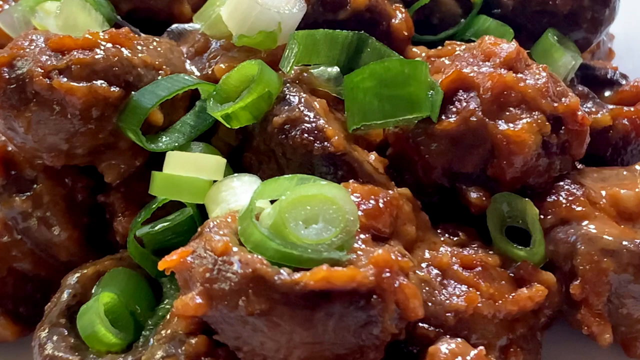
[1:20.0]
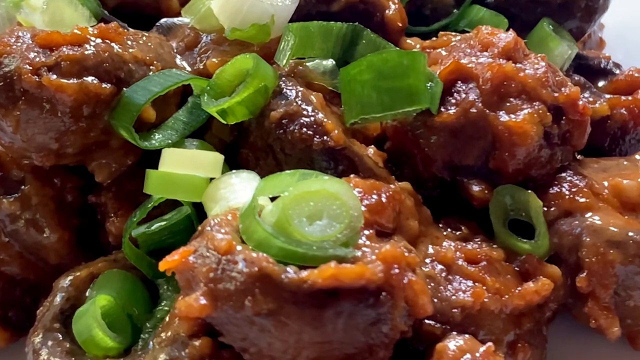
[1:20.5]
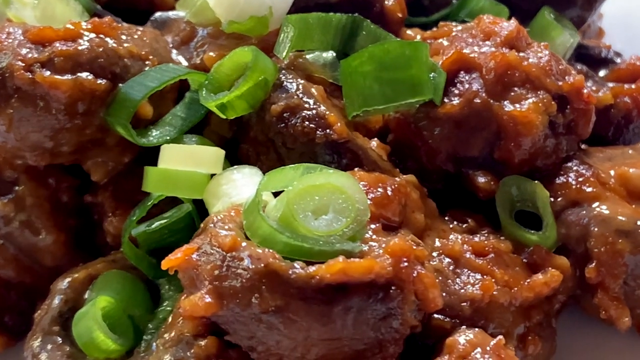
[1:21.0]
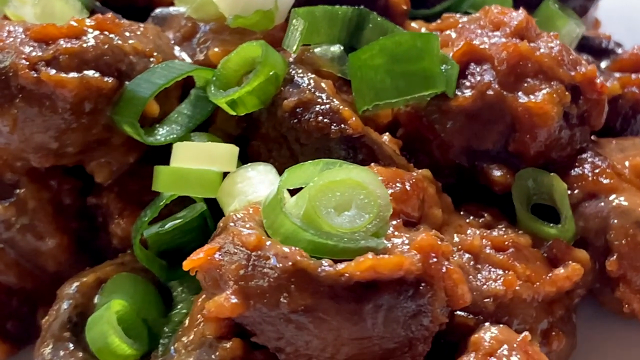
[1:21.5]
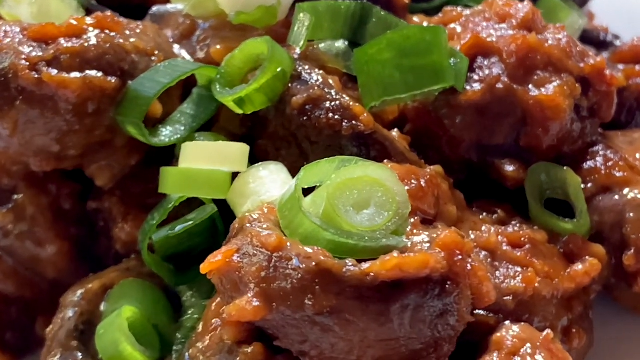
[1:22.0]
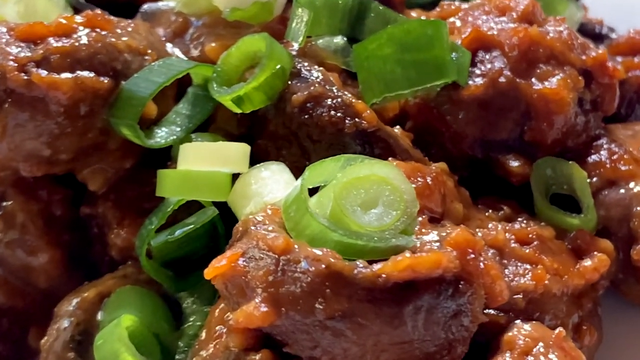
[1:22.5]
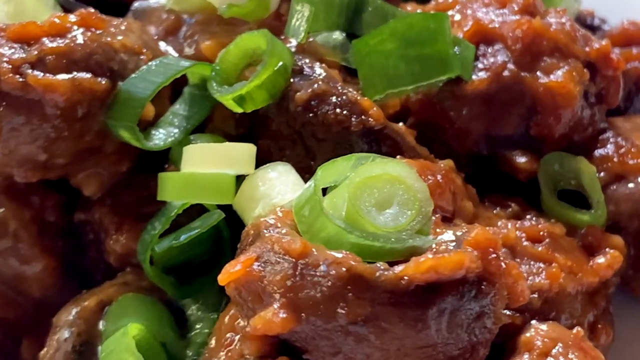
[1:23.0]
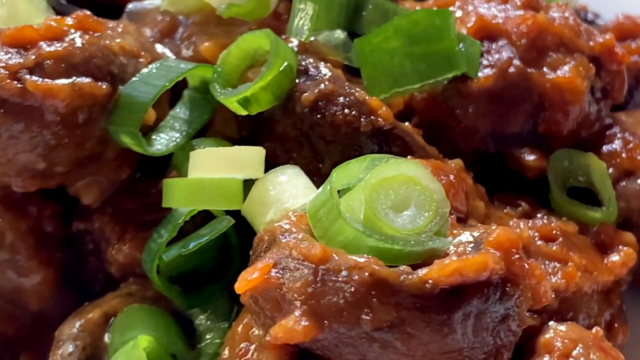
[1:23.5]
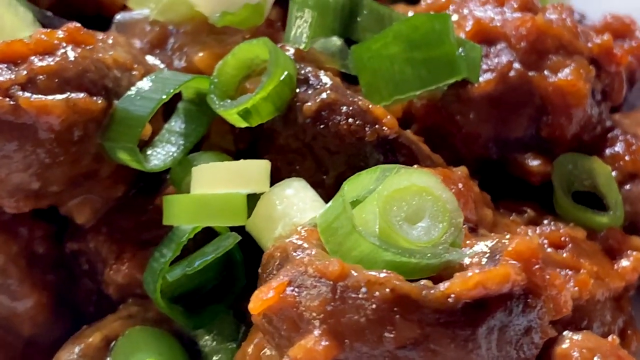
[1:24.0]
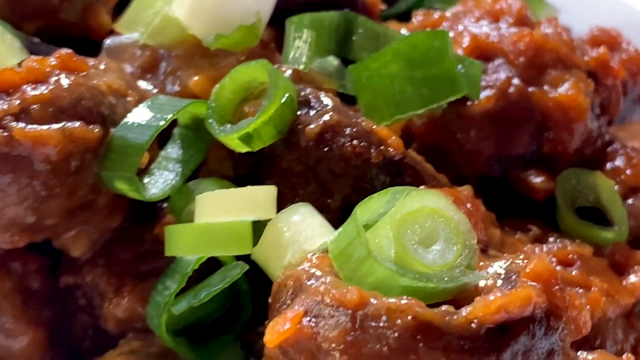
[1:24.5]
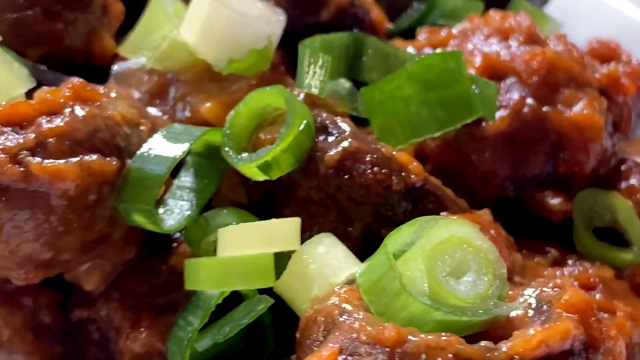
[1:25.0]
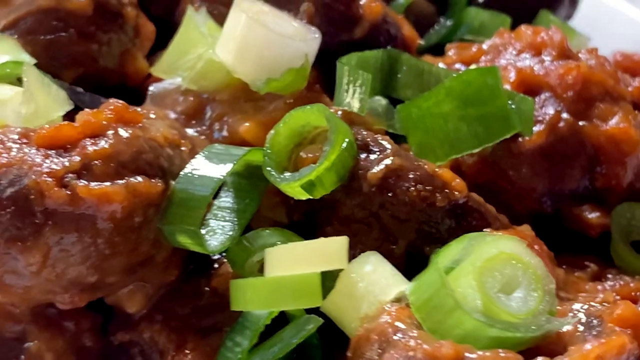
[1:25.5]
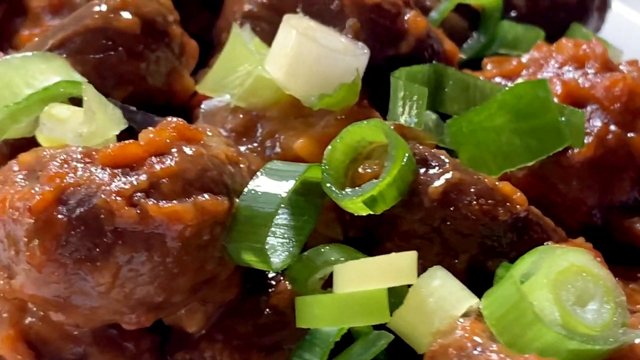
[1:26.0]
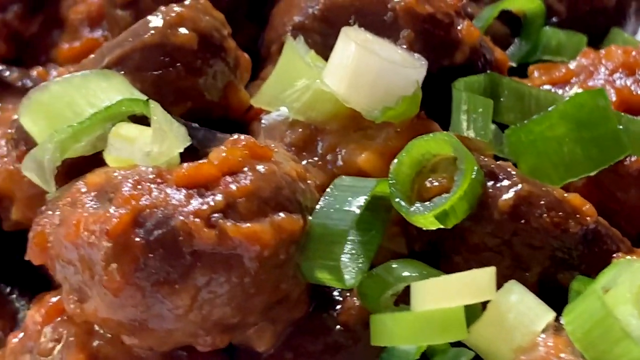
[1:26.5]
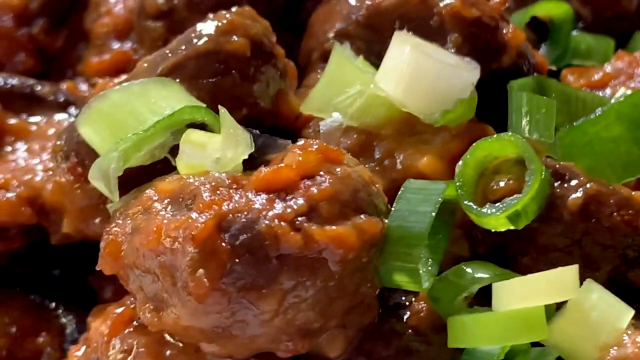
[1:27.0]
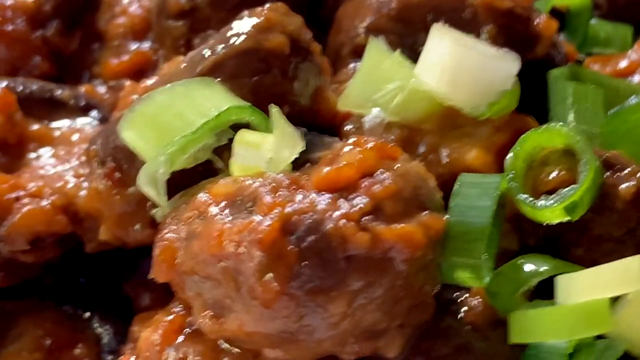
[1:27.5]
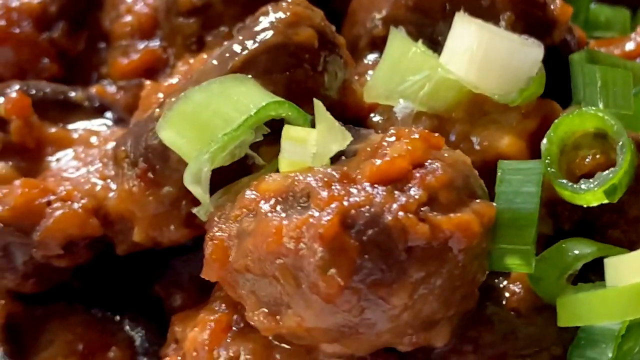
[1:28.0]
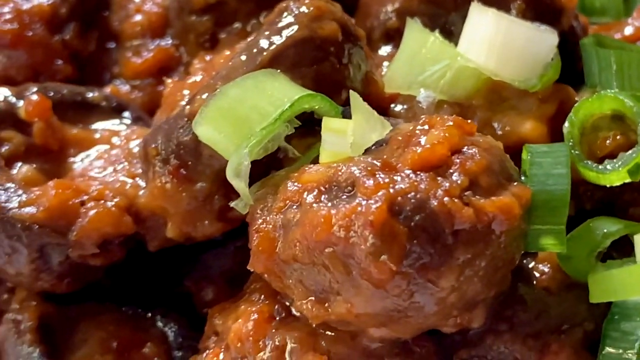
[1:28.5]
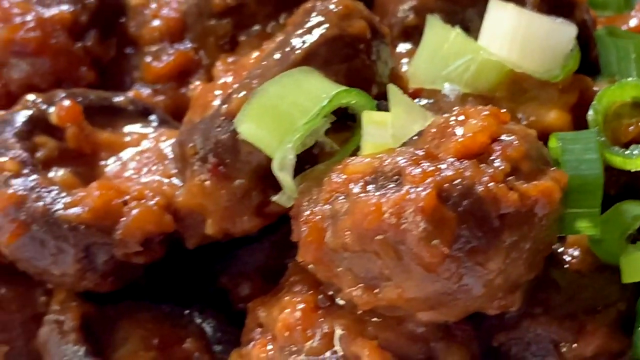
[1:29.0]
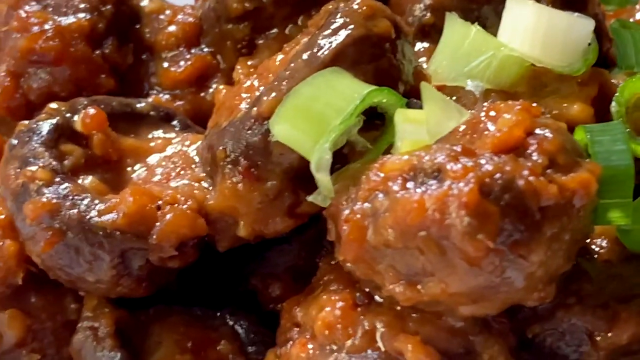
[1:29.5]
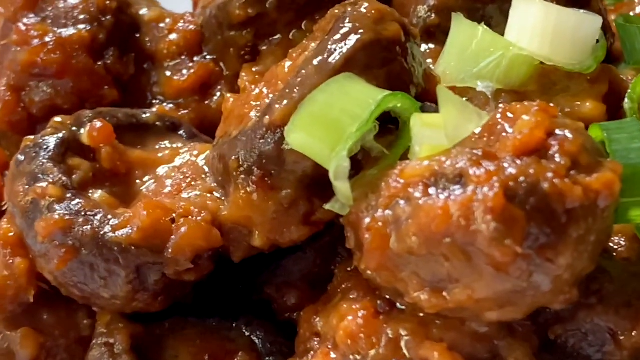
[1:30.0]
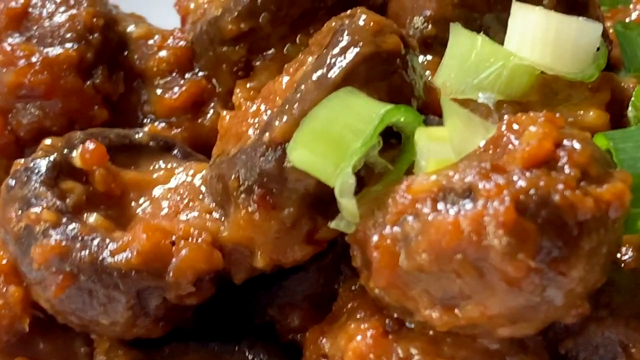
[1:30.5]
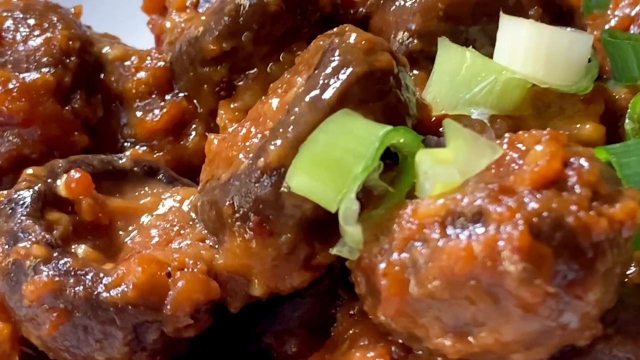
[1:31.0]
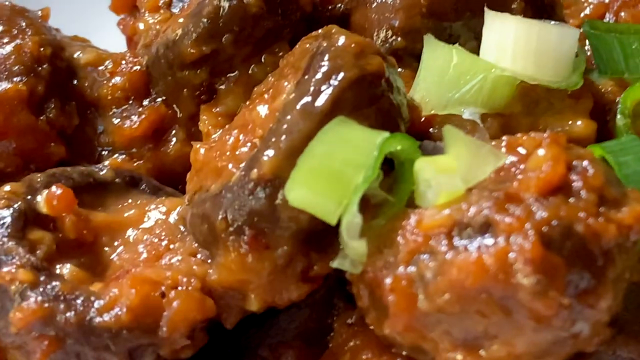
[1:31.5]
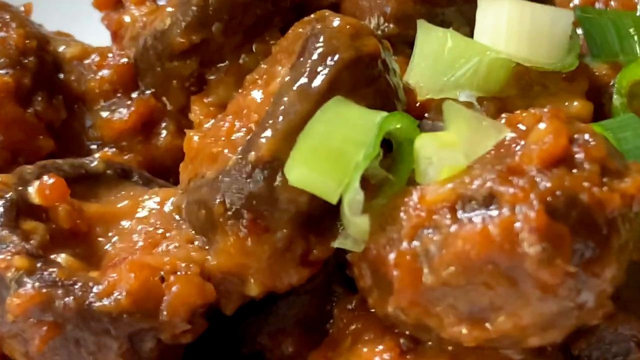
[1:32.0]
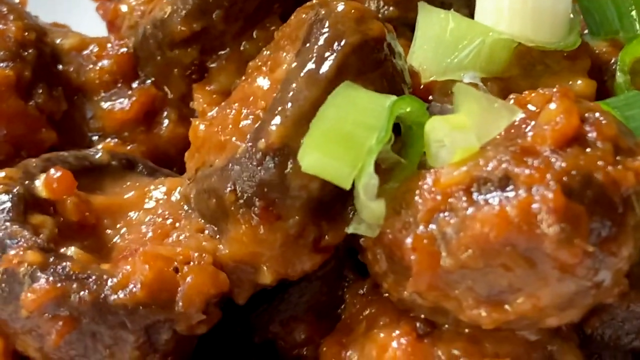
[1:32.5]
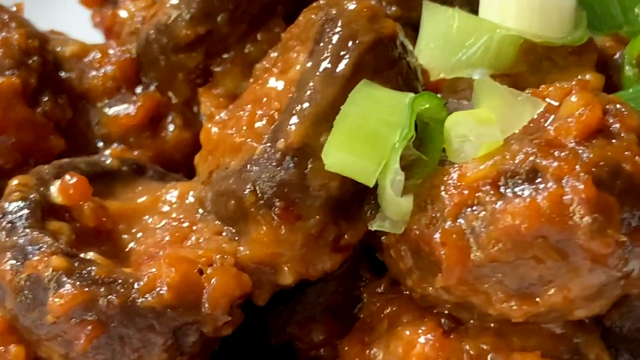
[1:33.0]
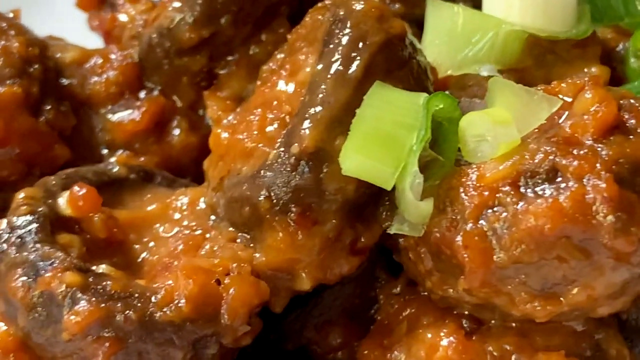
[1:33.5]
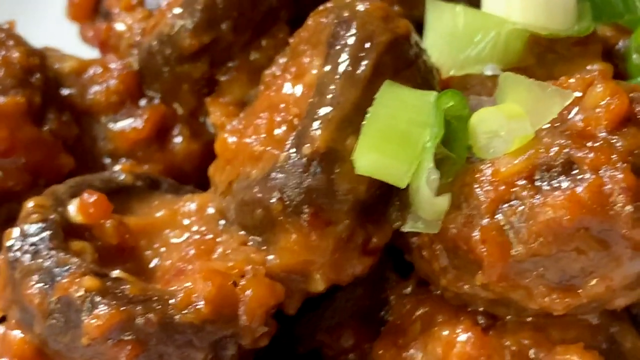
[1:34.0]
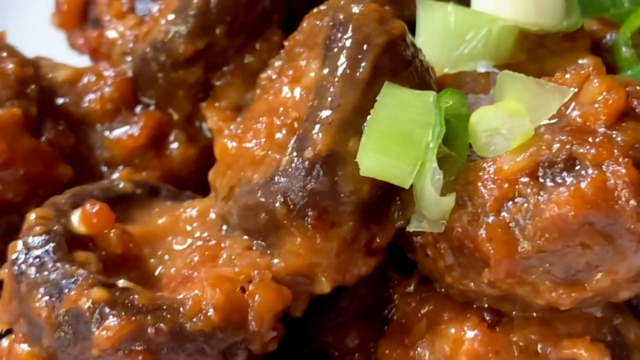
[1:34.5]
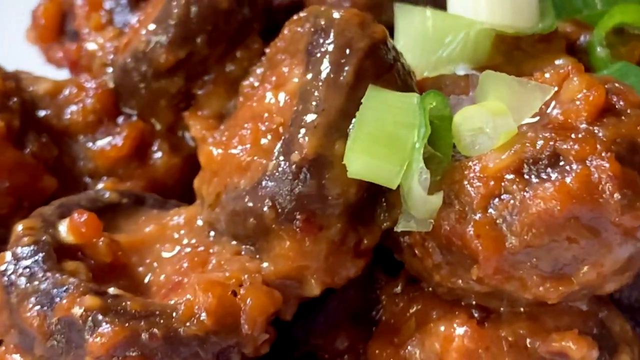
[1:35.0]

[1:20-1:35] A very close view shows a dish of mushrooms with a peanut butter sauce, garnished with scallions or green onions. The mushrooms are kind of a brown-orange color, and the sauce has made kind of ridges across their surface. In some areas the sauce looks really caramelized and quite thick, not saucy at all, sort of like the sauce on buffalo wings. Medallions and ribbons of green onion on top come in varying shades of dark green, light green, very pale green and even white. At one point the camera moves around, giving the impression of moving around the back side of the dish to view the peanut butter mushrooms from all angles. Little chili flakes or something similar are visible within the sauce.